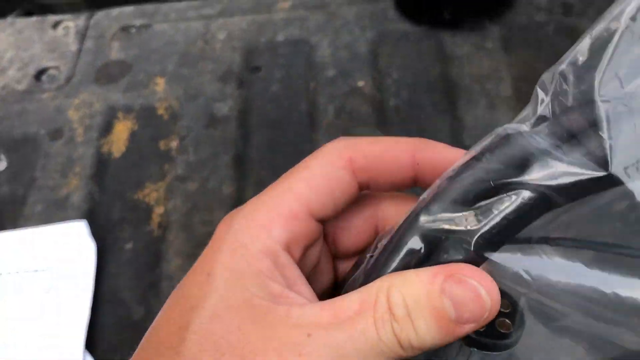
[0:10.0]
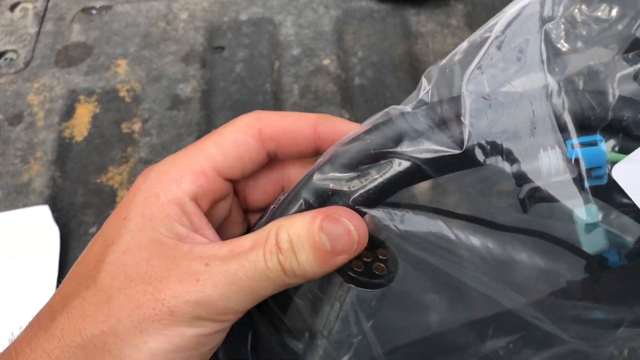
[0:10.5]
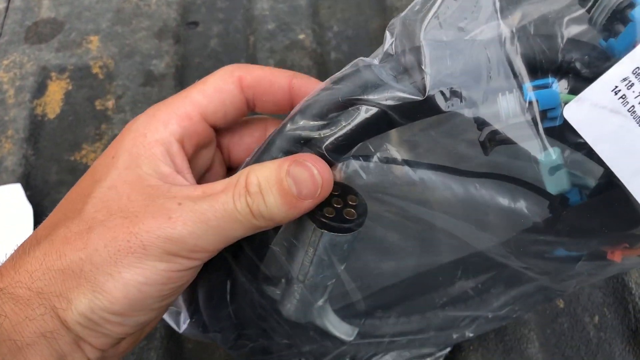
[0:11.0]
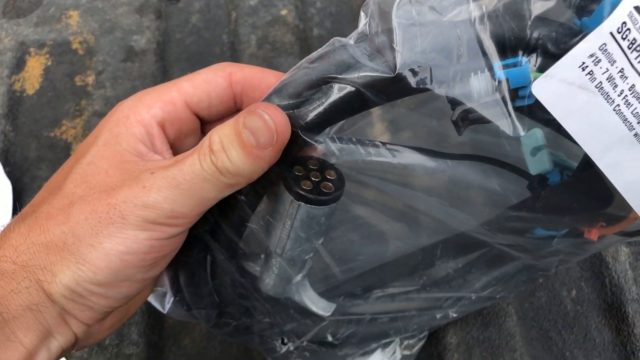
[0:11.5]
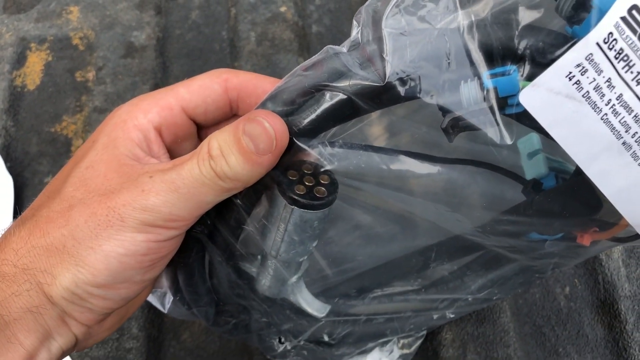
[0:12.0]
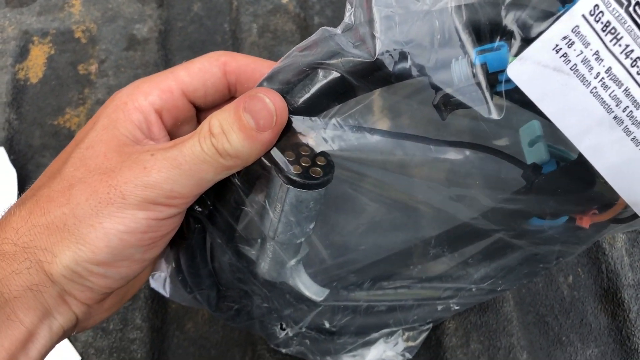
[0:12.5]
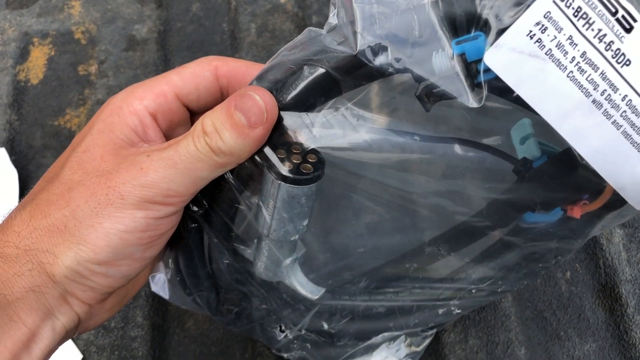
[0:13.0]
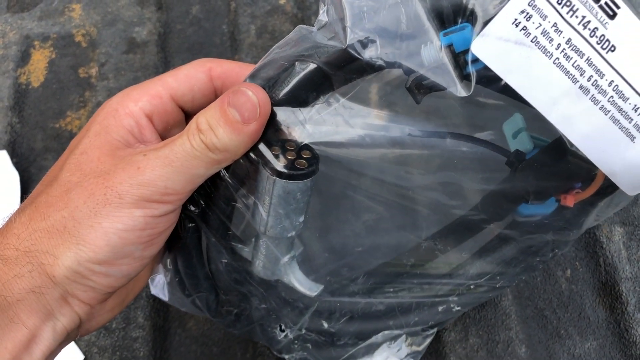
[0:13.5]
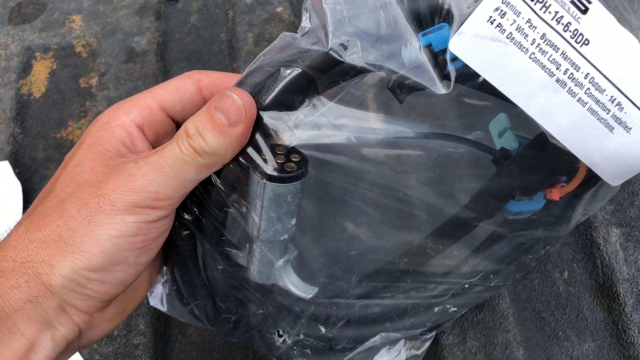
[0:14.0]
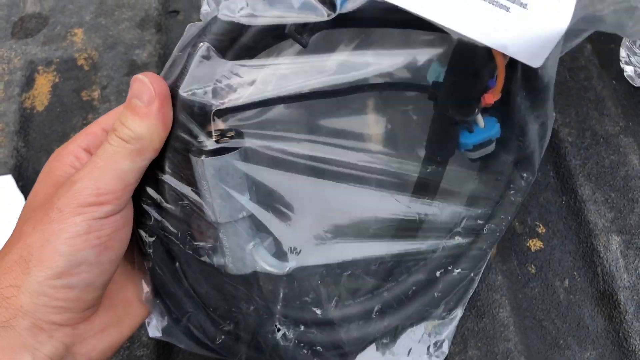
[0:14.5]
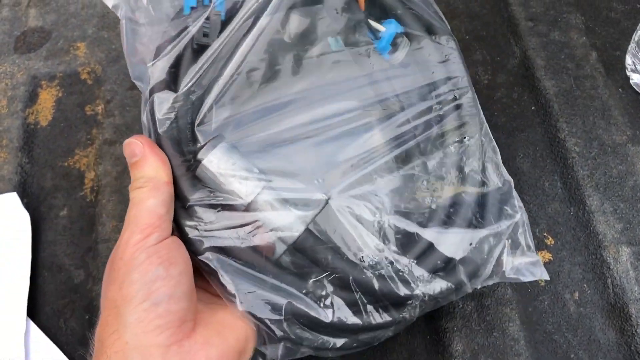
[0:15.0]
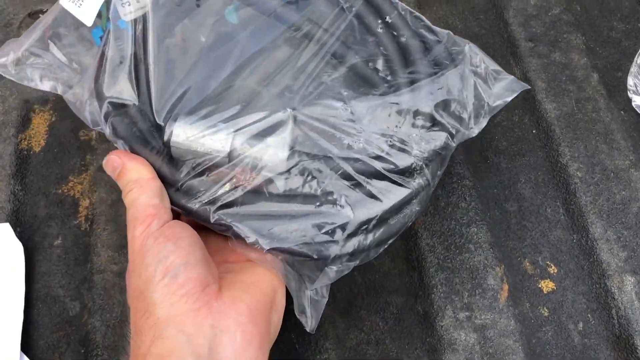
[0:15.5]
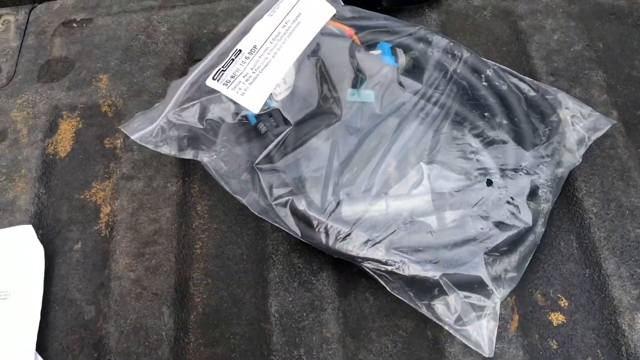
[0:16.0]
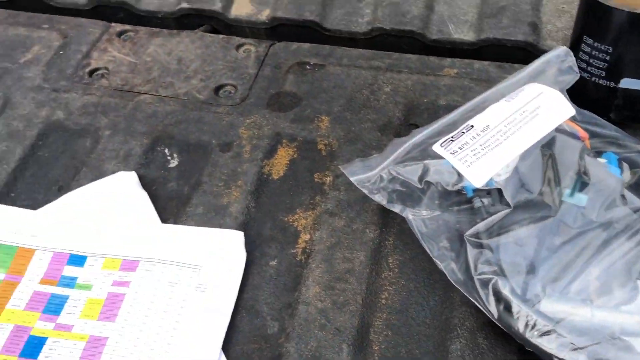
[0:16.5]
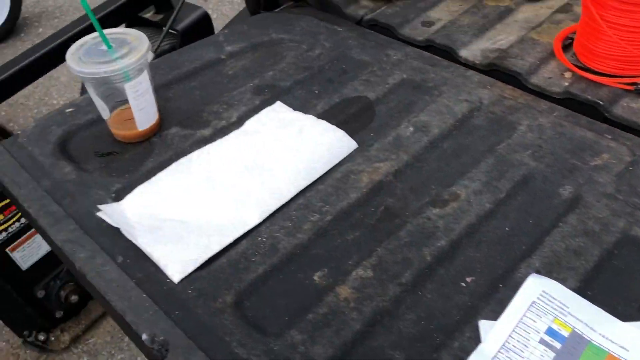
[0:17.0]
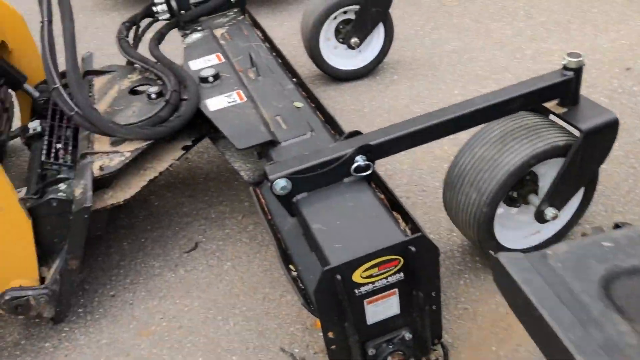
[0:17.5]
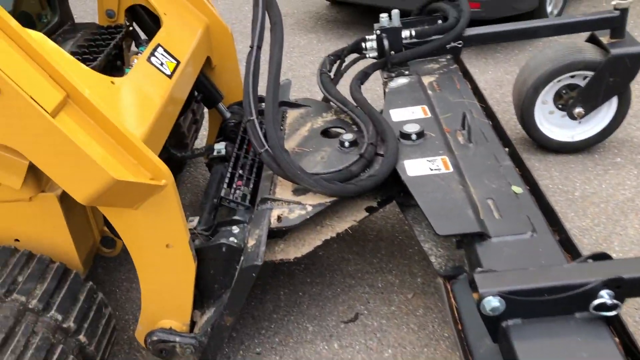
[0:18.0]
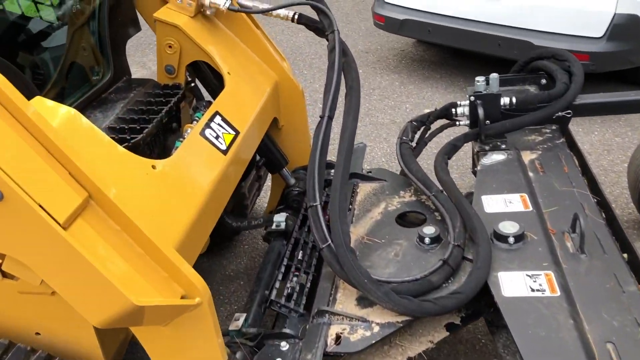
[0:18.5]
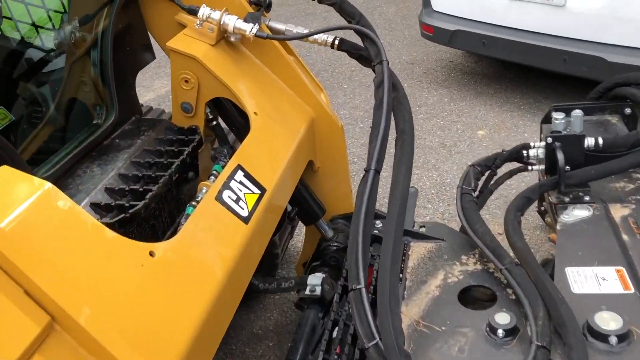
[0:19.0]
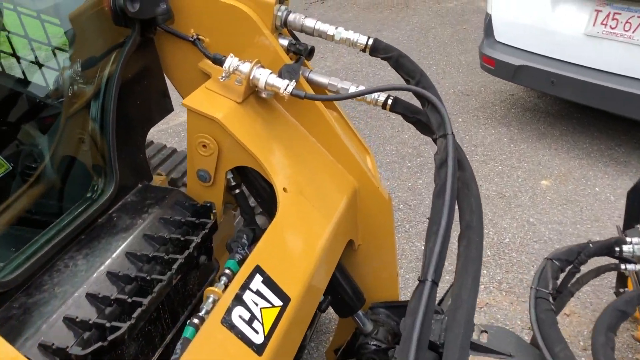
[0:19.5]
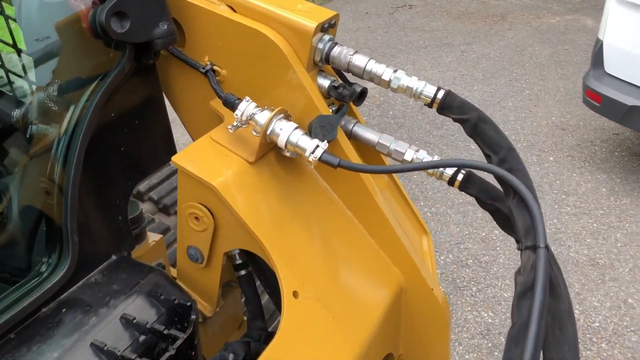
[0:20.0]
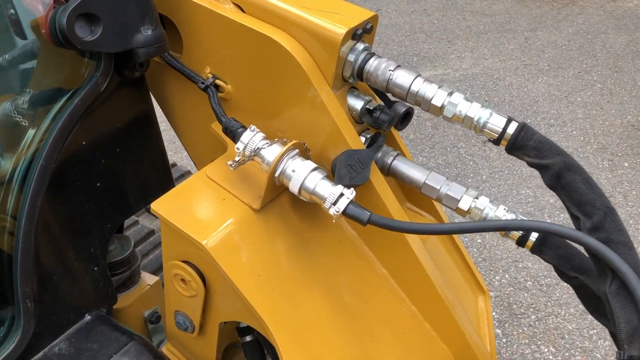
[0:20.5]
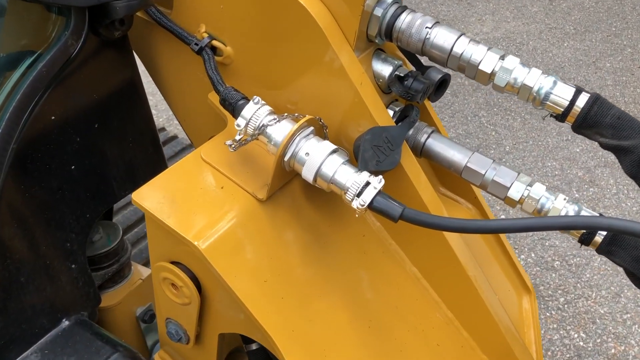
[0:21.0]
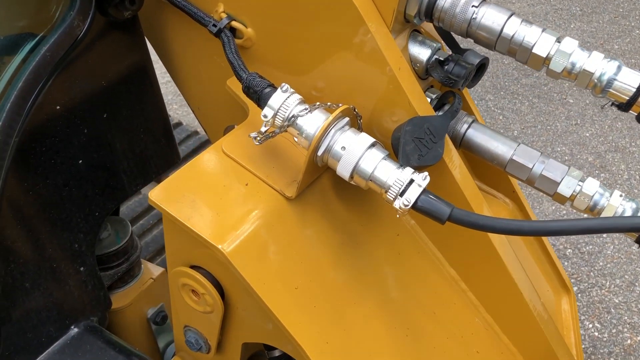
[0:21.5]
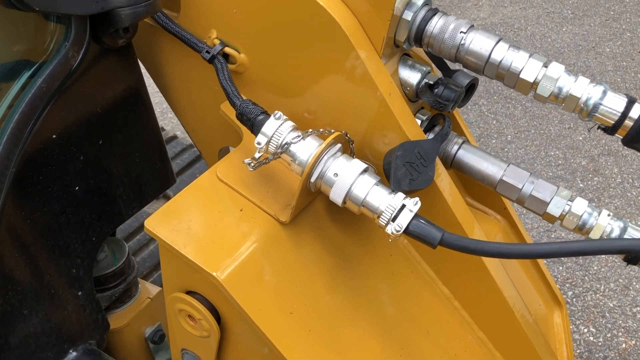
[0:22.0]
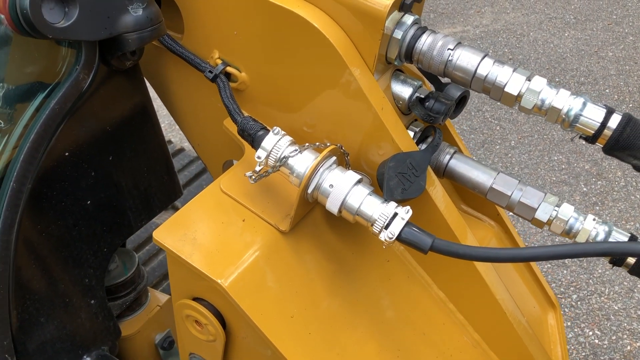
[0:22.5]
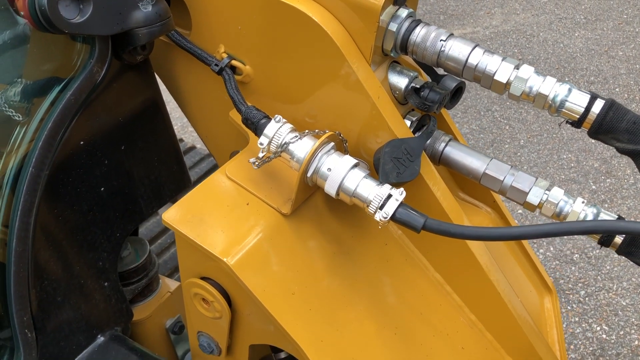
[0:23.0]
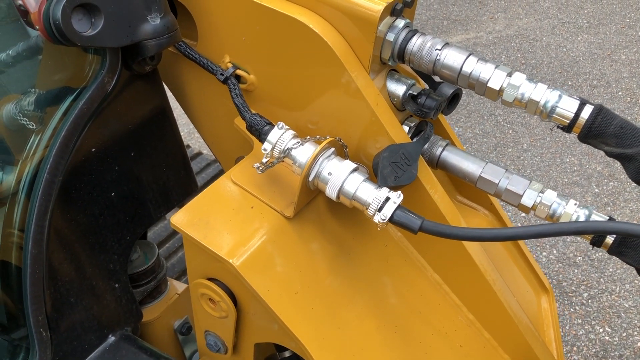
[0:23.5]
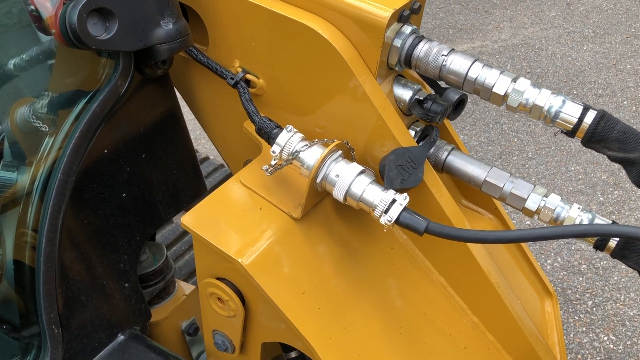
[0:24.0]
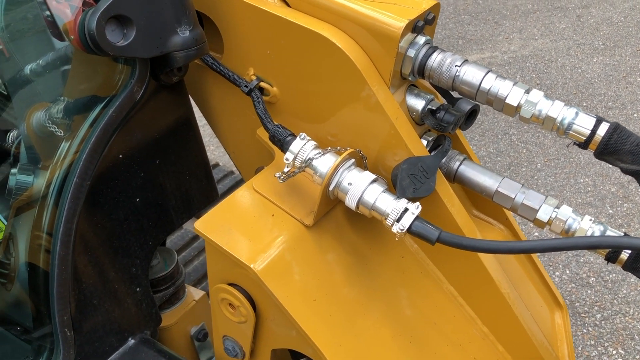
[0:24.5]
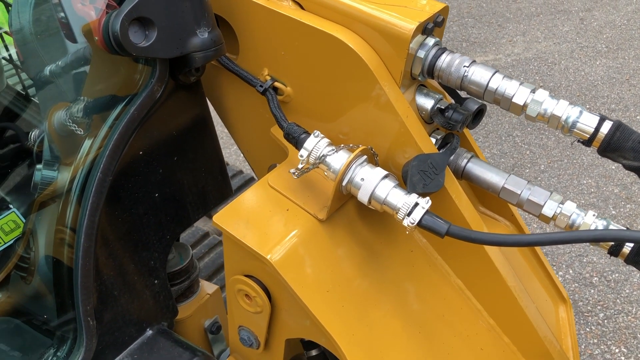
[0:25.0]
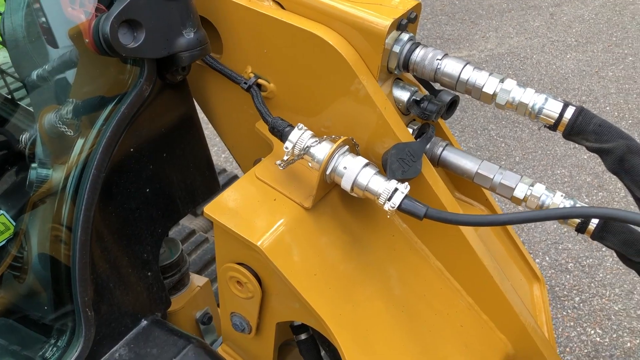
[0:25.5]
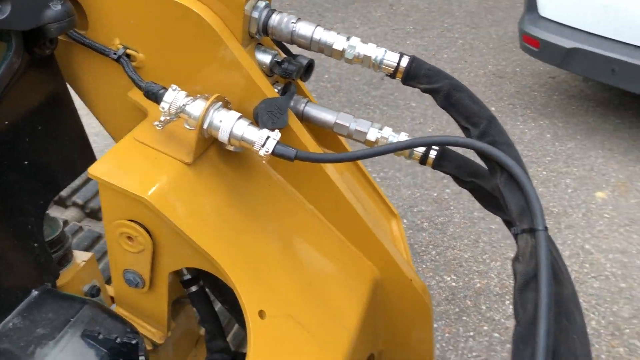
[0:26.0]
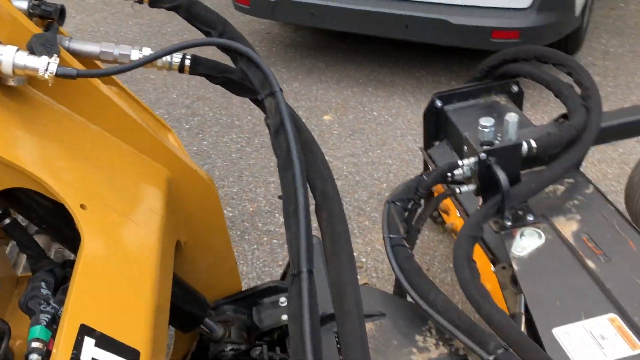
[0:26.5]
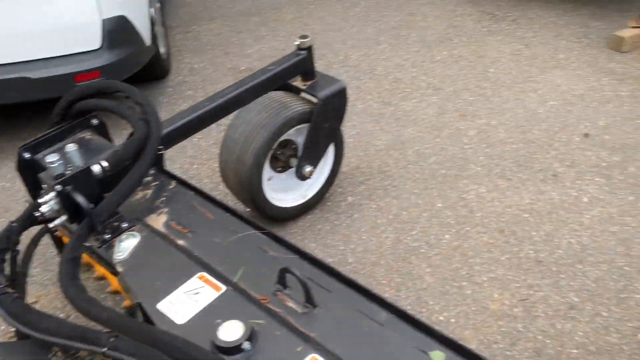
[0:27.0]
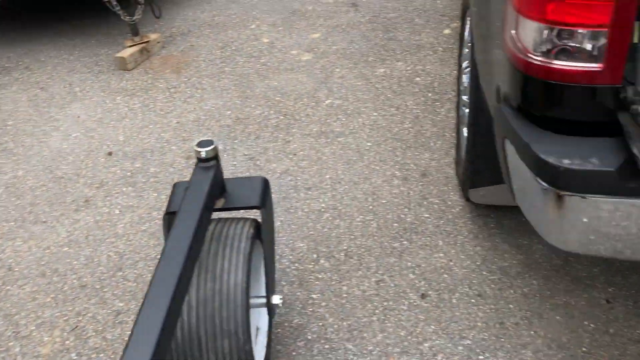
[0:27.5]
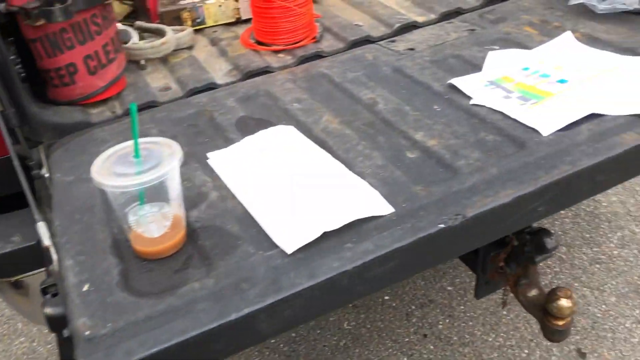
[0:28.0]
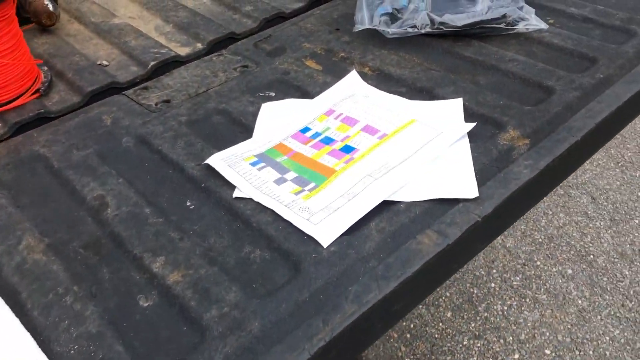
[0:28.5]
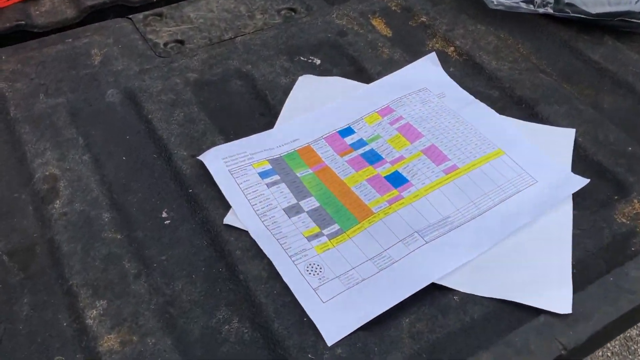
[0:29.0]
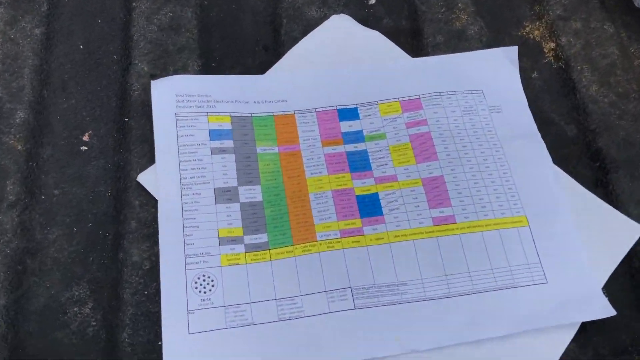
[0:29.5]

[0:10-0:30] Parts and materials used for the vehicle's work appear on screen. The man examines them, throws them onto the trunk of the truck, and the camera zooms back into some of the mechanical connections, including a pressure valve. The vehicle looks new. The camera also zooms into a manual showing how the suspension can be used; the equipment looks like a mechanical suspension or tool used to tow a damaged vehicle. The camera zooms from a component of the machine to the machine and back to the component, which appears to be new. A valve is shown, and there appears to be another trunk, which is opened.